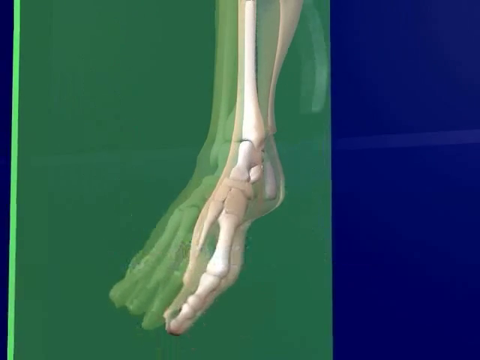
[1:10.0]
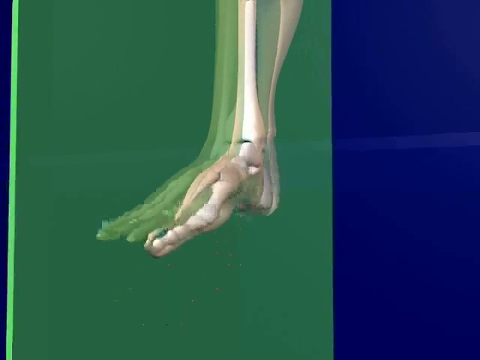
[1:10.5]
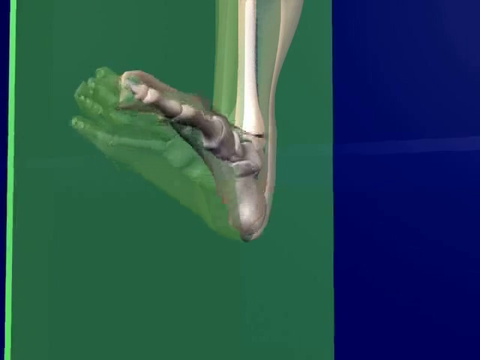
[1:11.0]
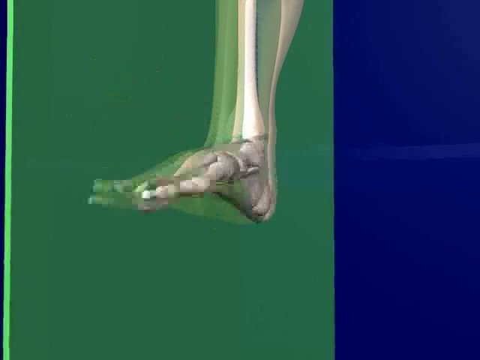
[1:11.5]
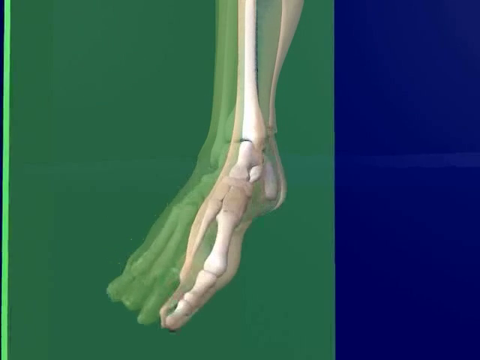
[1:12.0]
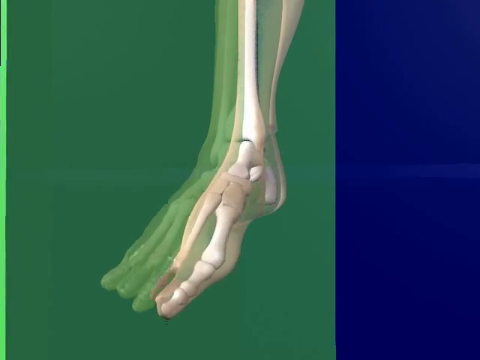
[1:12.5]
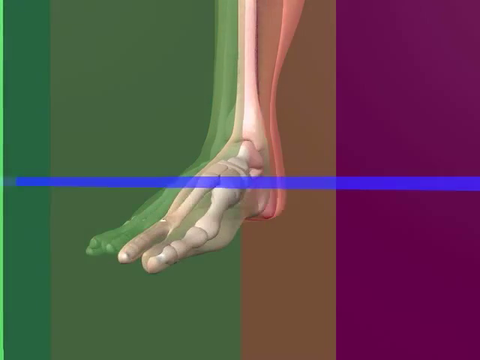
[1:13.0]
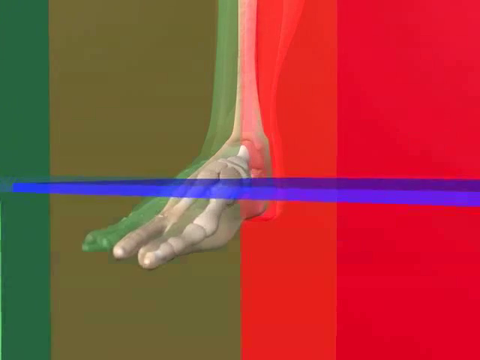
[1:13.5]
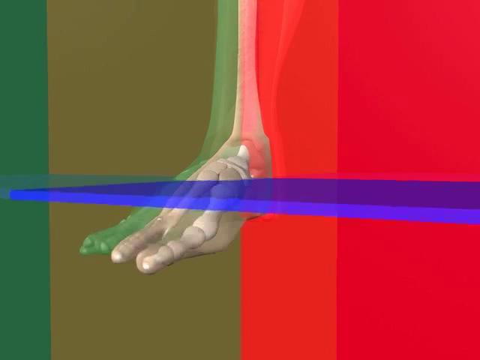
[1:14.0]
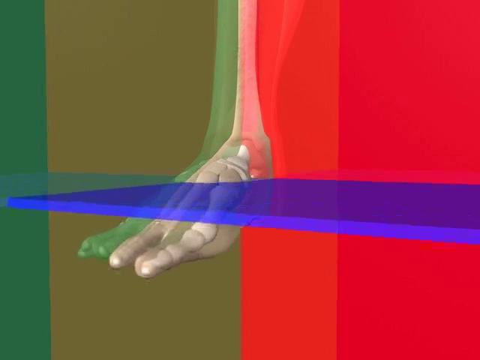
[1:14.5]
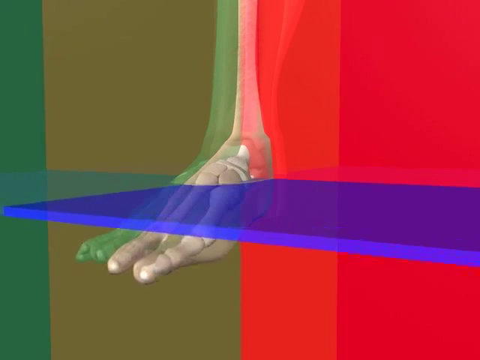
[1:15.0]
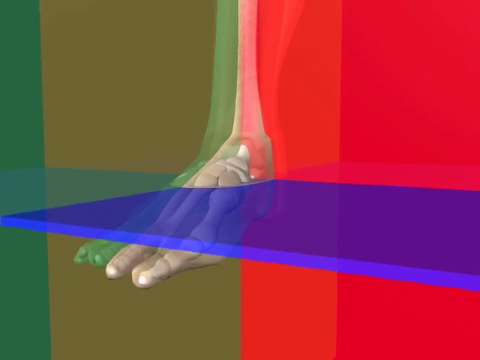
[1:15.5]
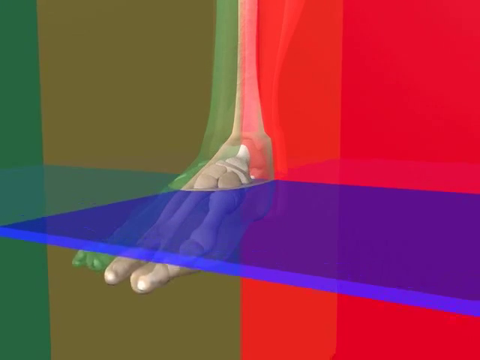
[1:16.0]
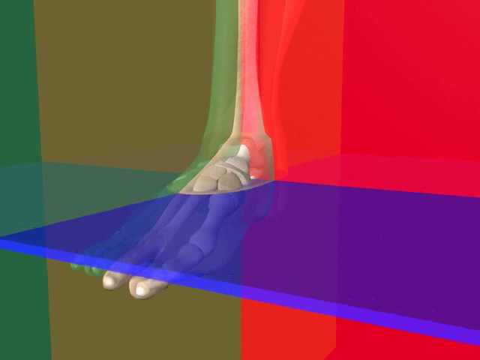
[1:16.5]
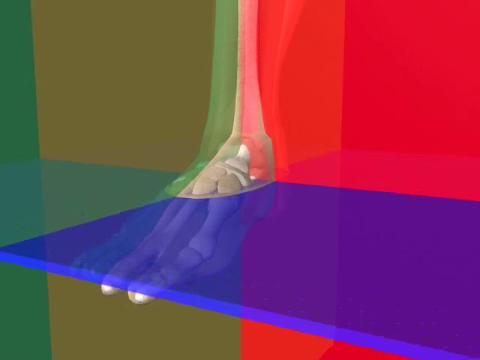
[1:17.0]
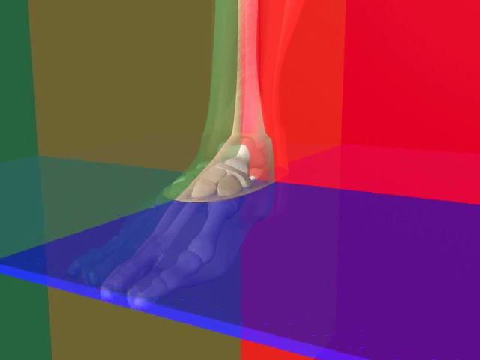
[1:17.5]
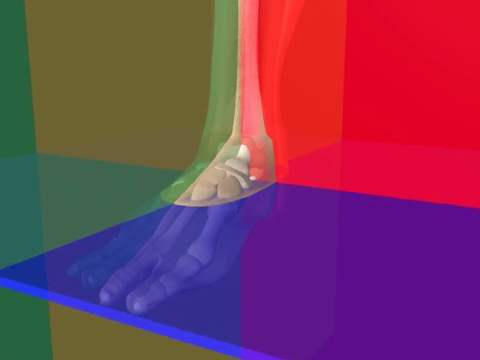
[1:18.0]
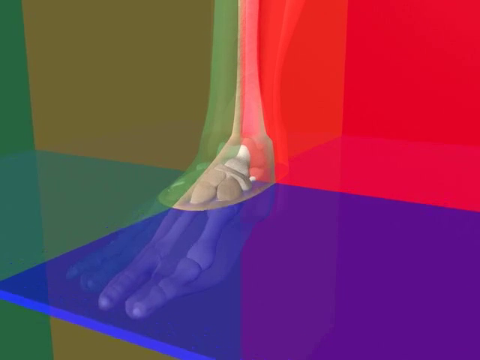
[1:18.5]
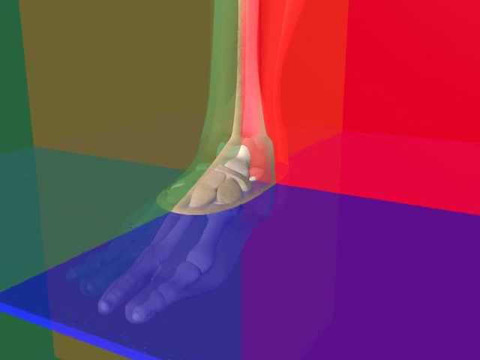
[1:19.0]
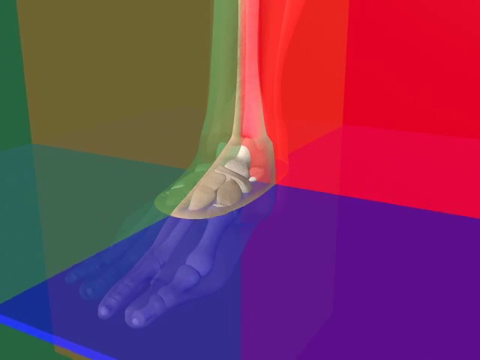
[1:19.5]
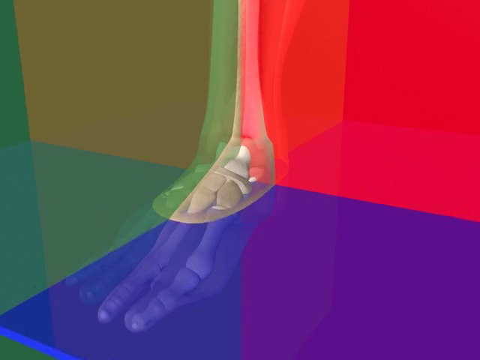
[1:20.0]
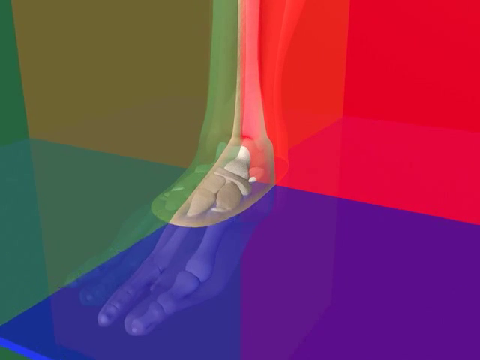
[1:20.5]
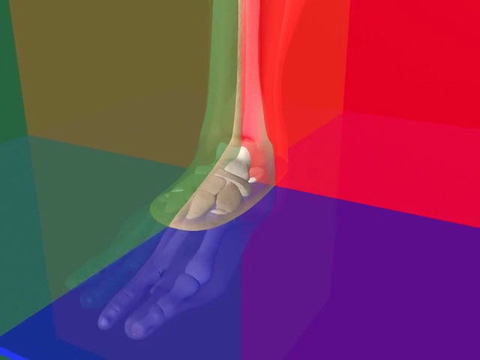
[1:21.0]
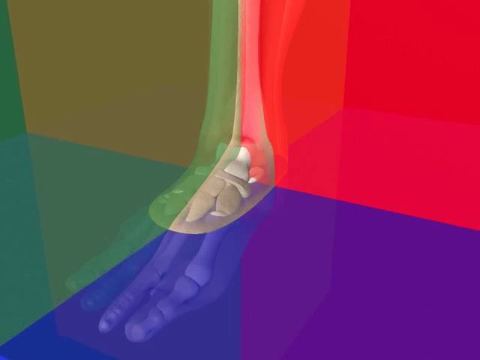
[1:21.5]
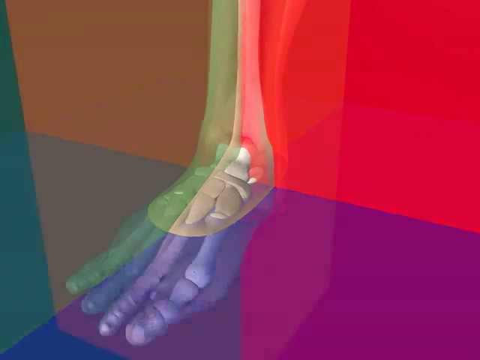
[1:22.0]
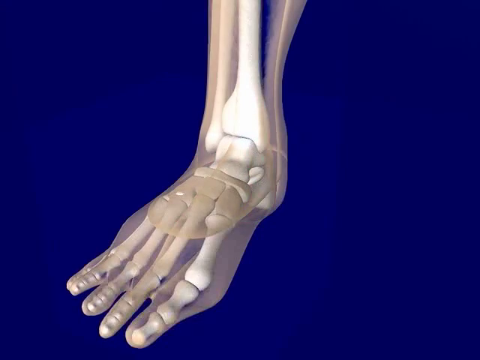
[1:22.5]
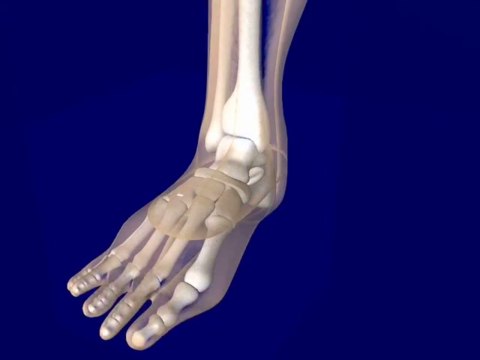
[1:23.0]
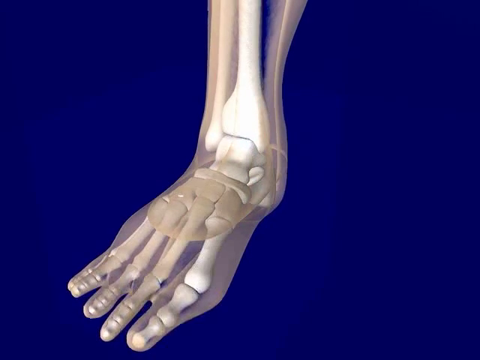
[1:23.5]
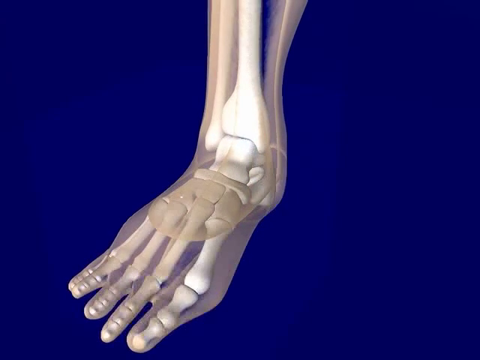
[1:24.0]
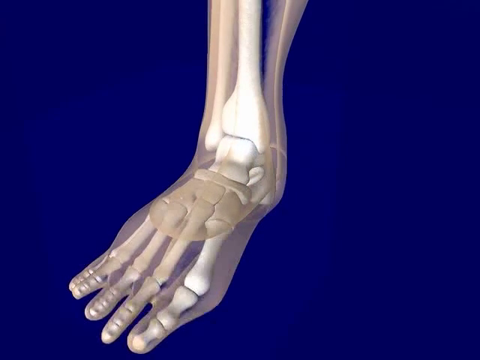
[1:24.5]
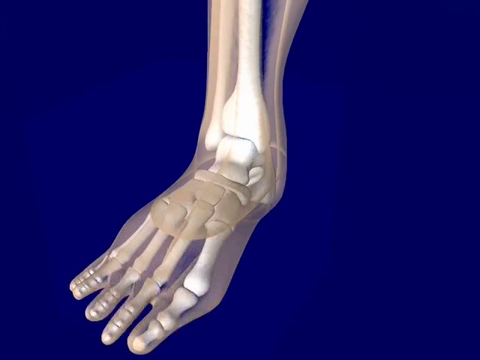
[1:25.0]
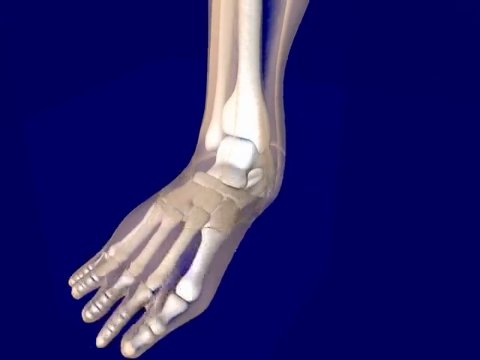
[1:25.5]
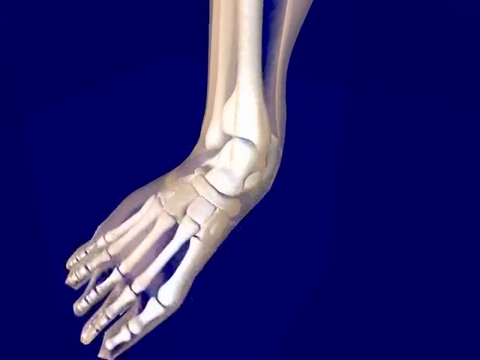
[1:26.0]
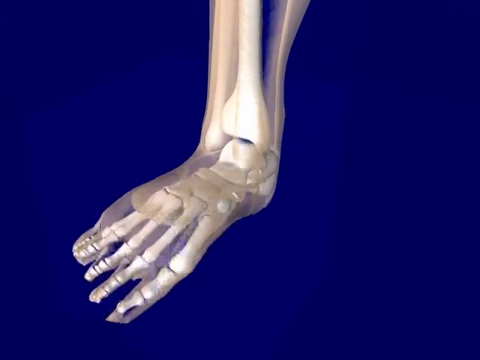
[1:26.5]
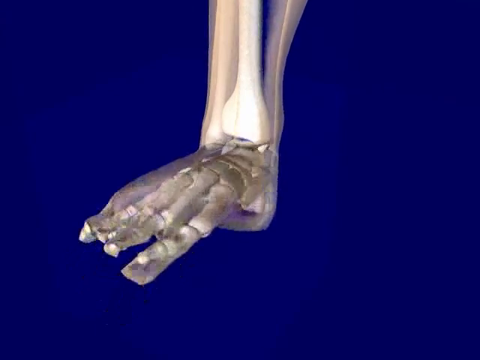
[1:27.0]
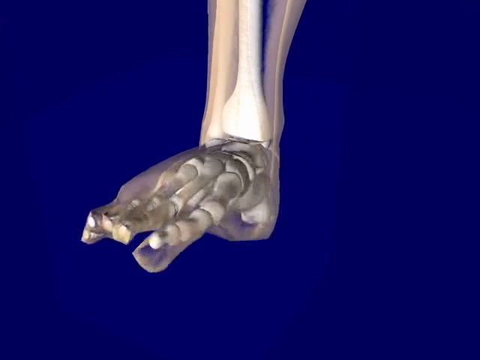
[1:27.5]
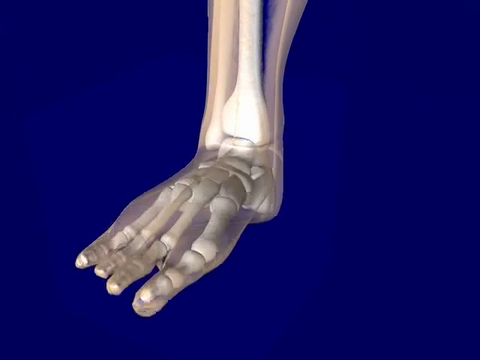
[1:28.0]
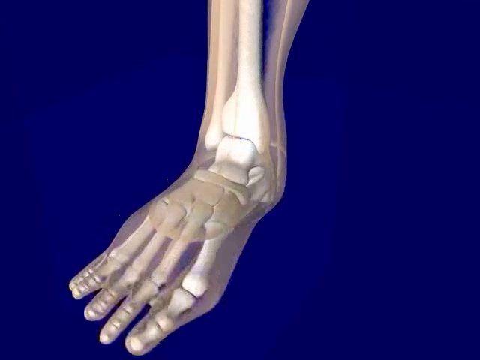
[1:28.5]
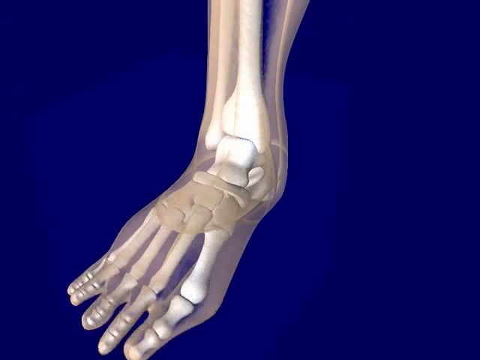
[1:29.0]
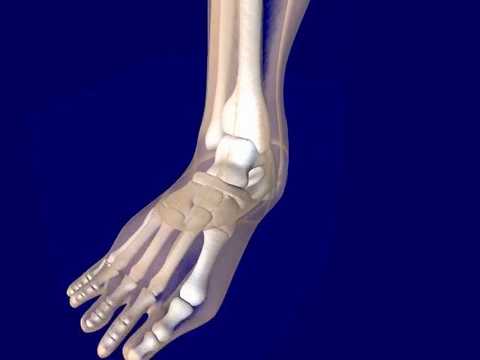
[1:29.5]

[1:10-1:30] An x-ray version of a foot is shown; it is see-through, so only the bones are visible. The foot is brought up and then down. A solid purple shield is placed on it, bringing the foot down to a different level. The foot rotates in the ankle bone, showing the components that move during this action. The foot continues to be brought up and down, and it is divided into sections by different colors, with purple and green at the base of the foot. The bones are drawn up and drawn down. The leg is see-through. Part of the screen is green and part is blue. There is a lot of movement at the ankle, which consistently moves up and down.